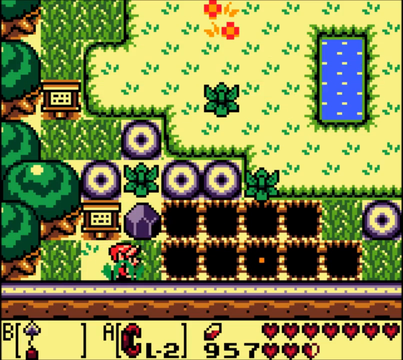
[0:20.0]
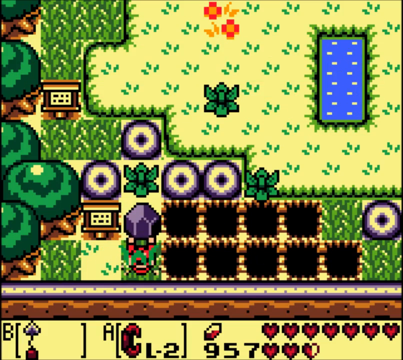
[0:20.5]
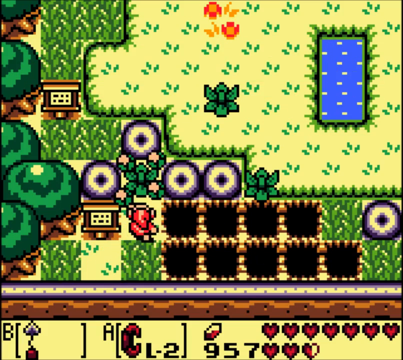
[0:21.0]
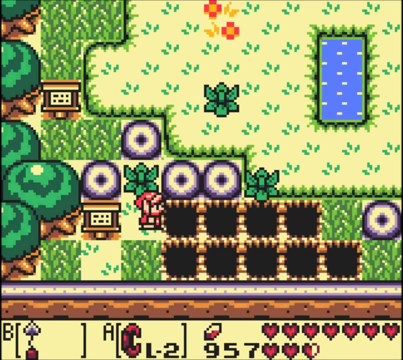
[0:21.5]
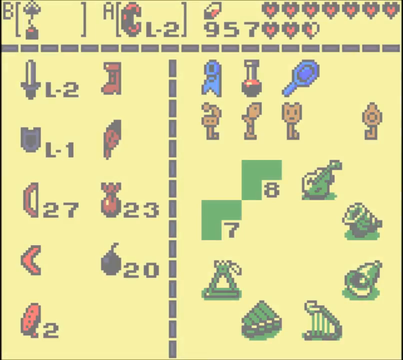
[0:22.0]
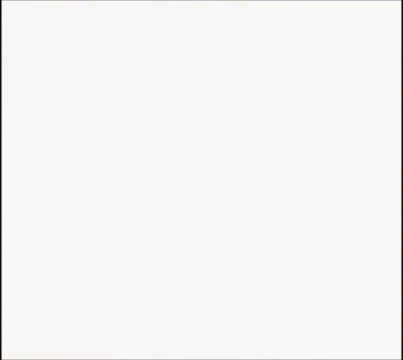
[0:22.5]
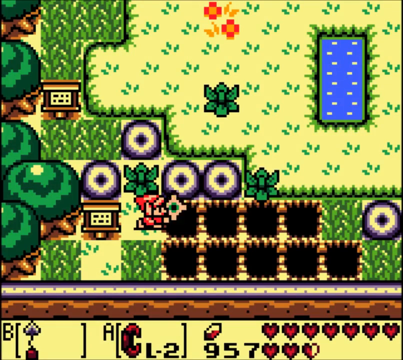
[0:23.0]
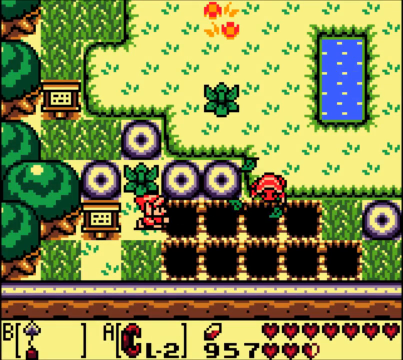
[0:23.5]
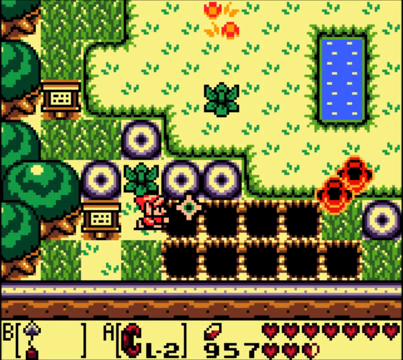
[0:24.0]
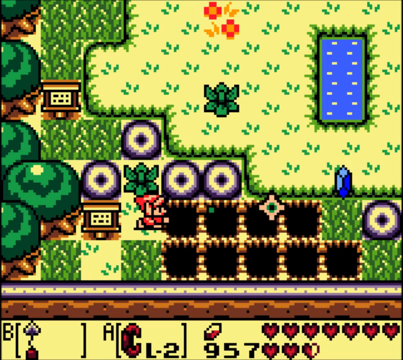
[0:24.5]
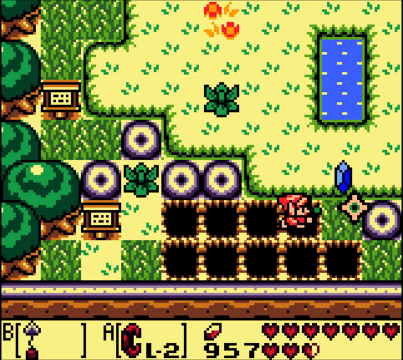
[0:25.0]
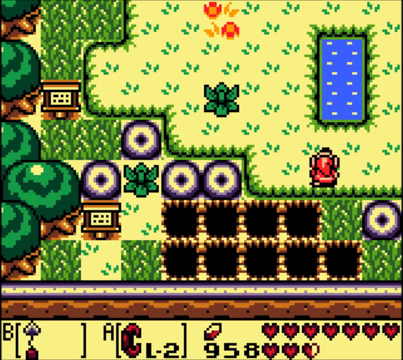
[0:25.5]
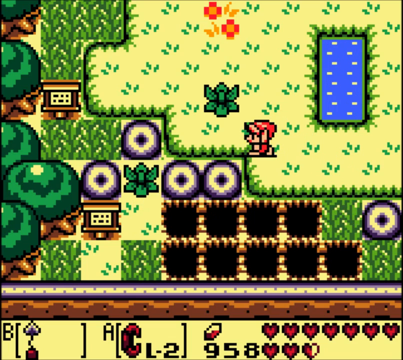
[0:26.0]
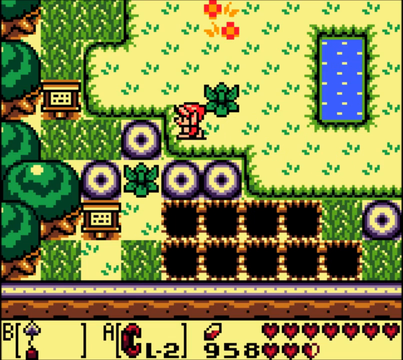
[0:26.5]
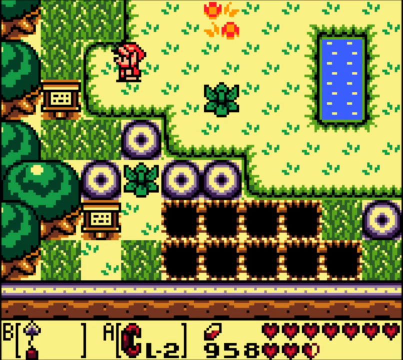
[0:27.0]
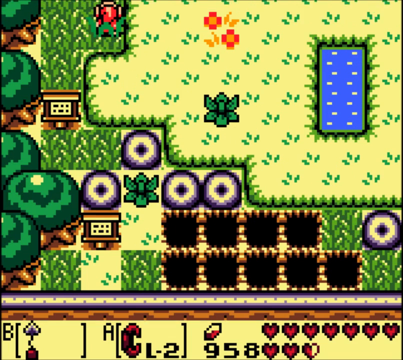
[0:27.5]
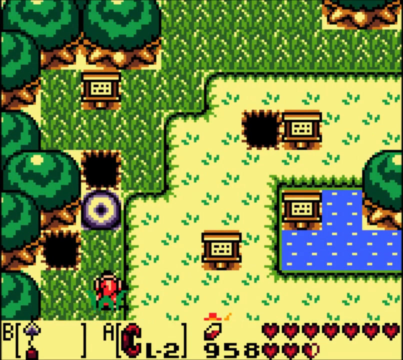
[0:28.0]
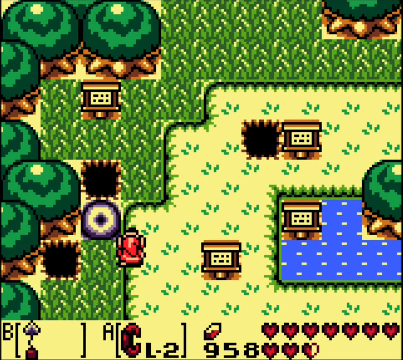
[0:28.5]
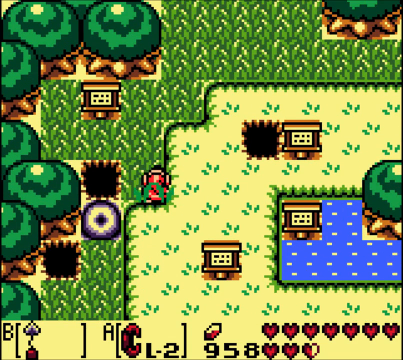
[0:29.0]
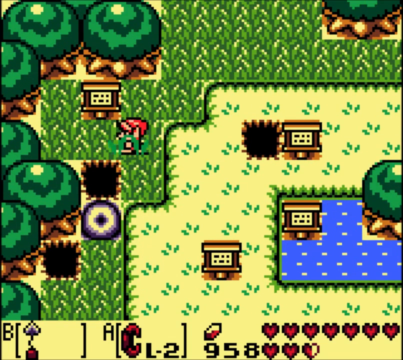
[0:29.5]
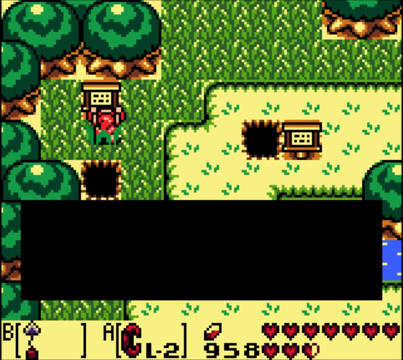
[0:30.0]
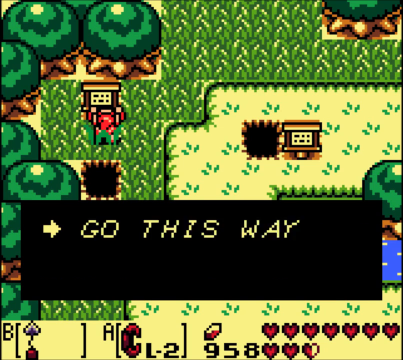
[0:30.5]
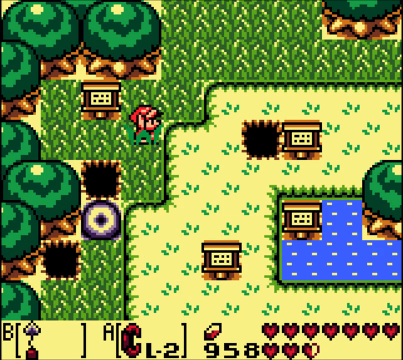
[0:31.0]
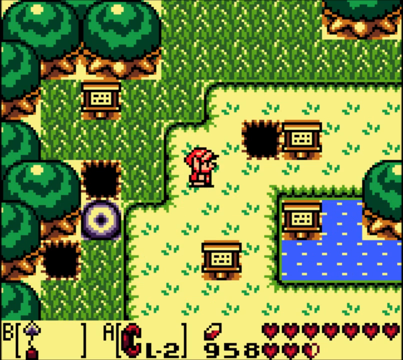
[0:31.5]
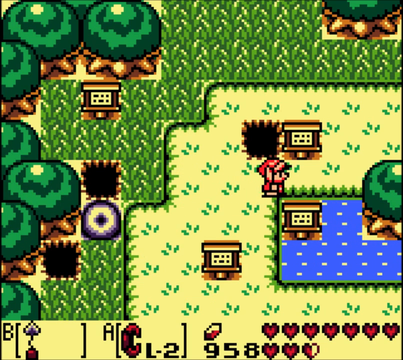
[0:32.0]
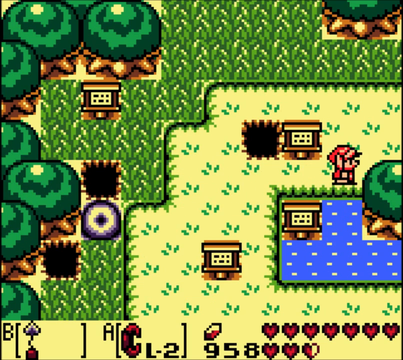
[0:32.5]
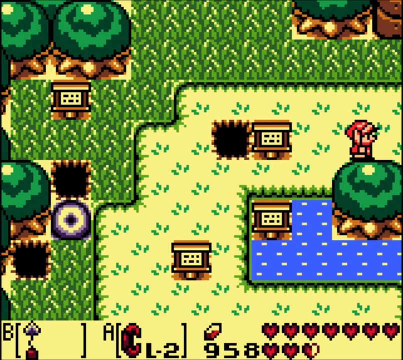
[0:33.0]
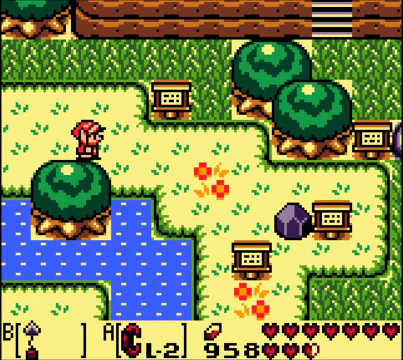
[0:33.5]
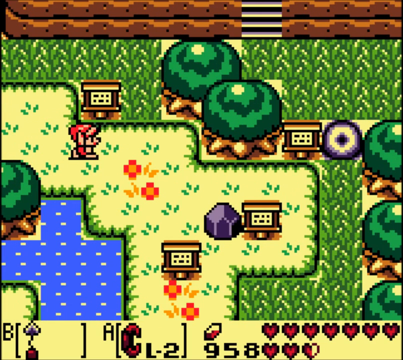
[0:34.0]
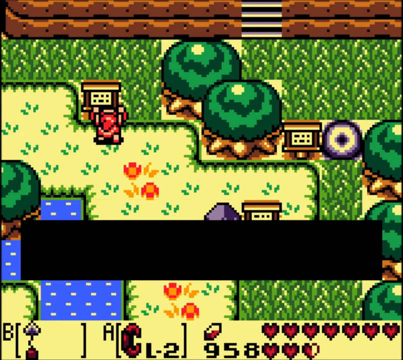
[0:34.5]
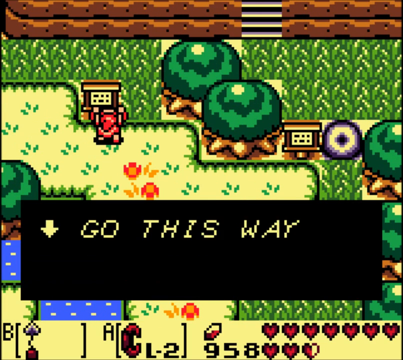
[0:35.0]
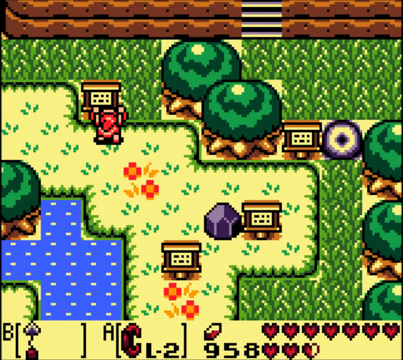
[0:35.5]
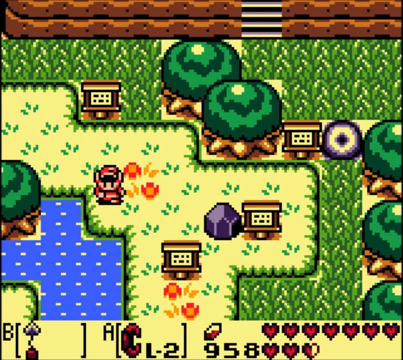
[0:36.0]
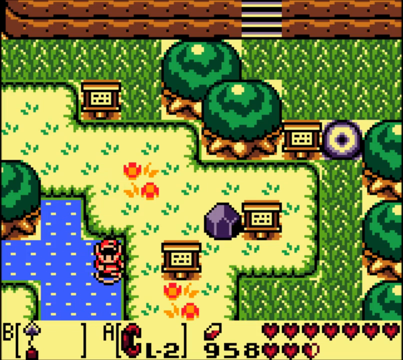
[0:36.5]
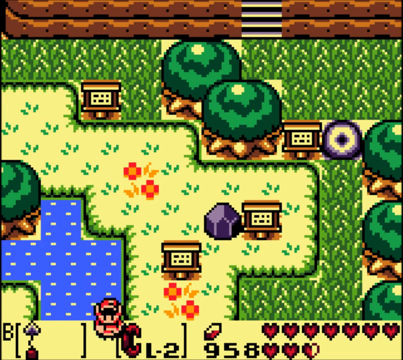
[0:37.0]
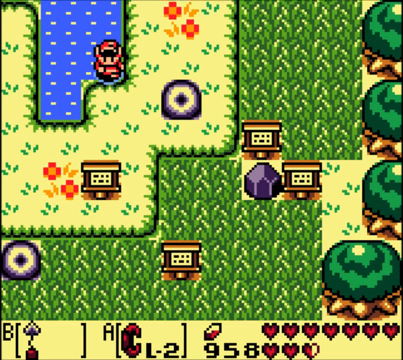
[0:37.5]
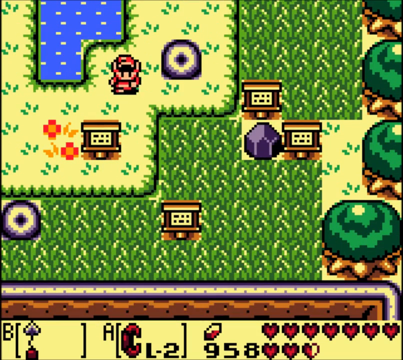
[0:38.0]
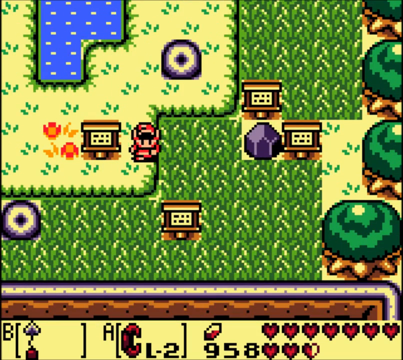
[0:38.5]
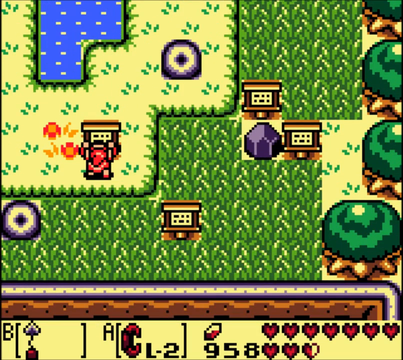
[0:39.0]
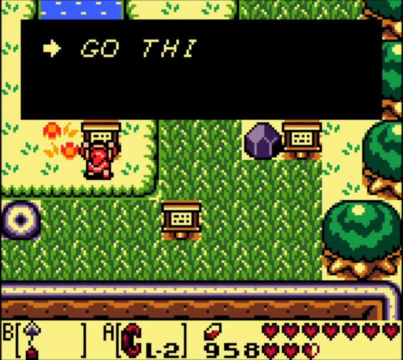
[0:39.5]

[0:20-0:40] The red humanoid 8- or 16-bit character is in another section of the game map, which has a row of five holes in the ground with four more above it, some purple round objects that may be flowers, some green leafy plants, some trees, a sparsely covered desert area with small amounts of green, a couple of what look like red and orange flowers, and a blue area of water. The character moves rapidly around the screen, heading to the top, and the screen scrolls up into the next area. He walks into a sign that says "go this way" with an arrow pointing right, so he moves right; the screen scrolls when he reaches its edge, and he reads the next sign, which says "go this way" with an arrow pointing down. He walks down the screen, paddling through the water until he reaches the next sign, which reads "go this way" with a right arrow.